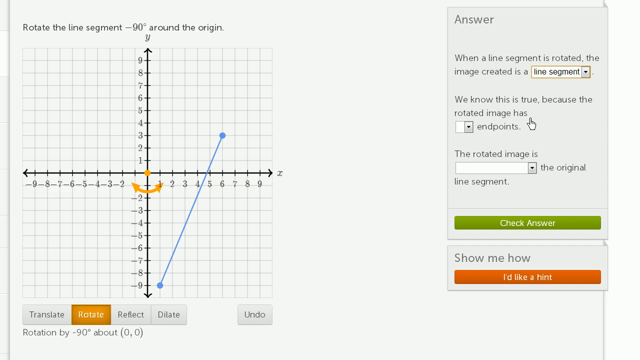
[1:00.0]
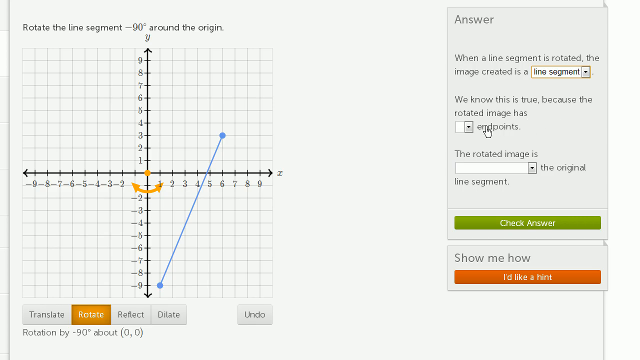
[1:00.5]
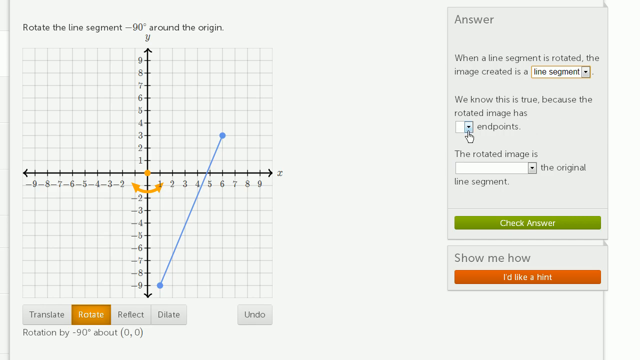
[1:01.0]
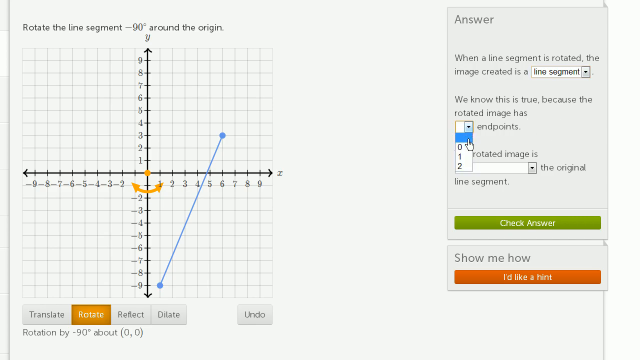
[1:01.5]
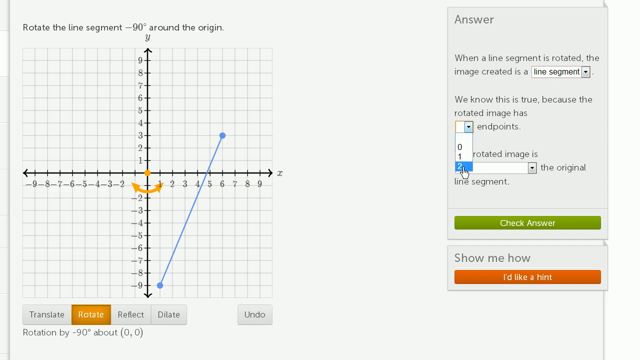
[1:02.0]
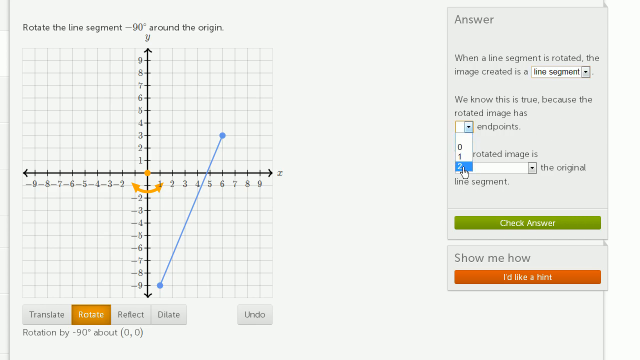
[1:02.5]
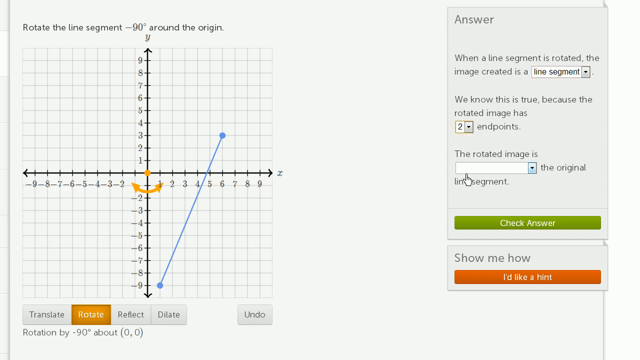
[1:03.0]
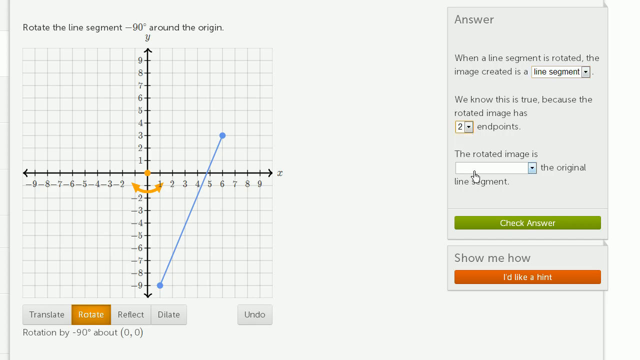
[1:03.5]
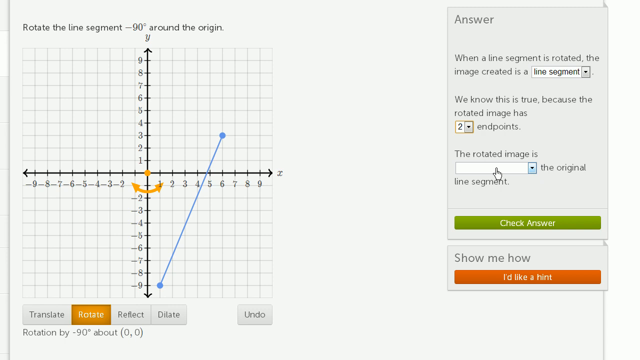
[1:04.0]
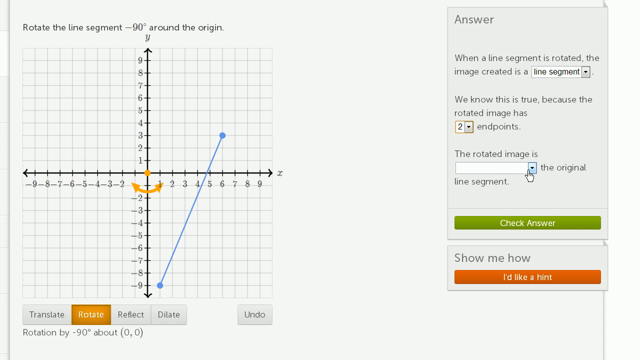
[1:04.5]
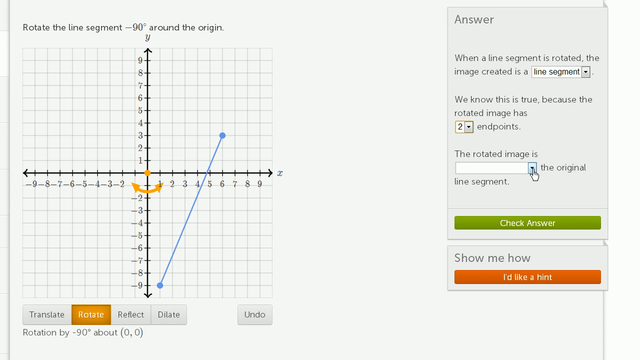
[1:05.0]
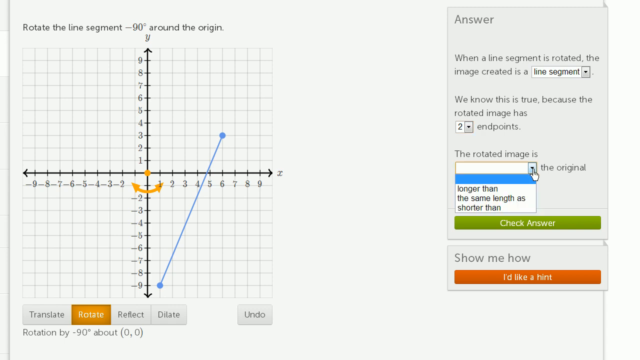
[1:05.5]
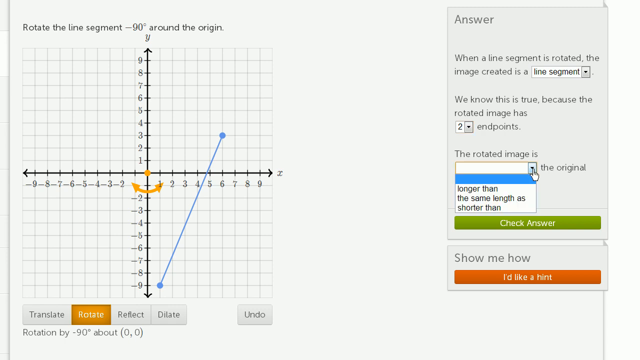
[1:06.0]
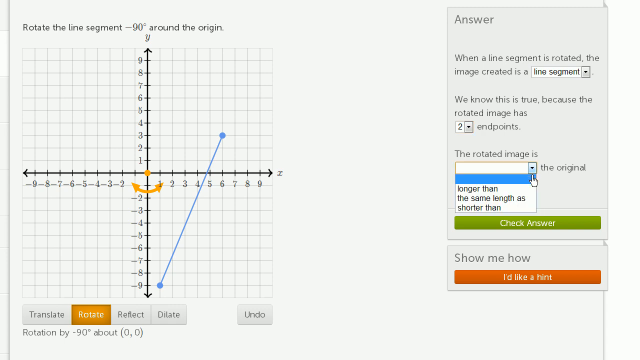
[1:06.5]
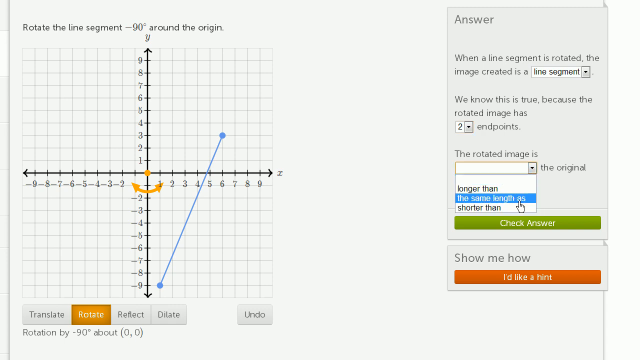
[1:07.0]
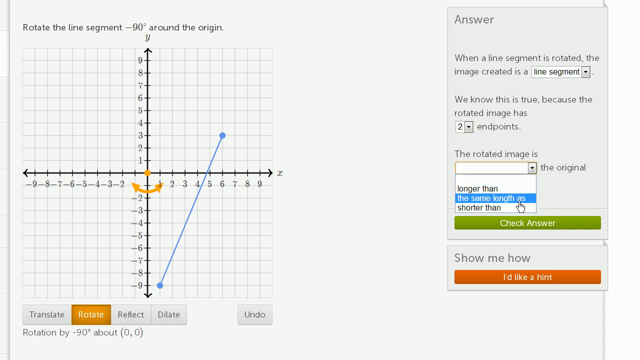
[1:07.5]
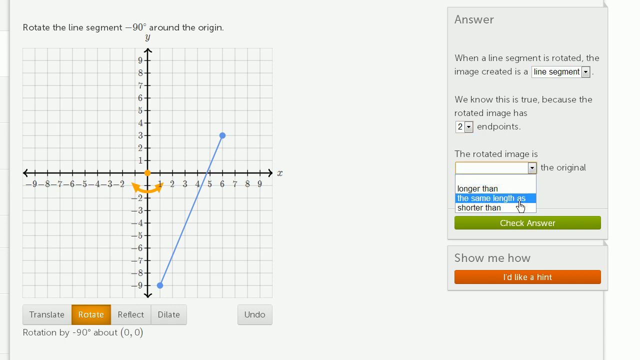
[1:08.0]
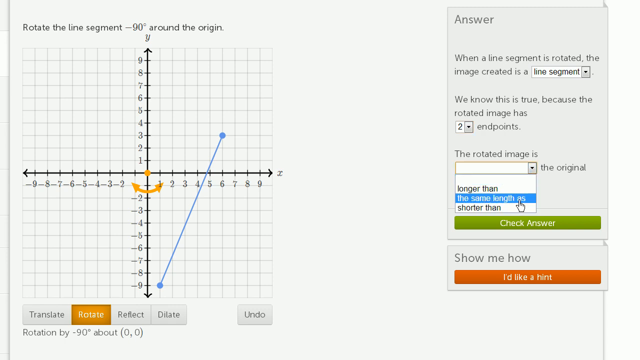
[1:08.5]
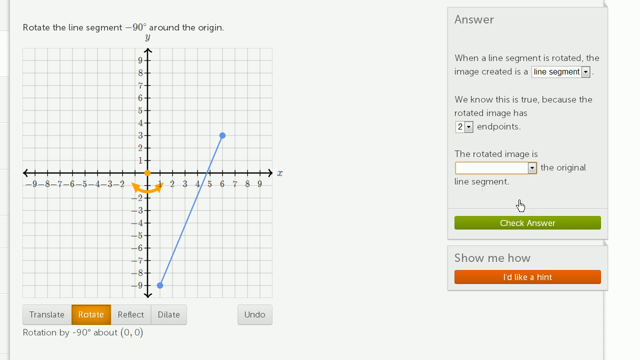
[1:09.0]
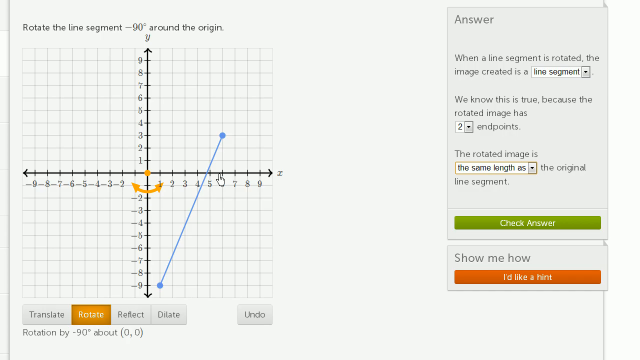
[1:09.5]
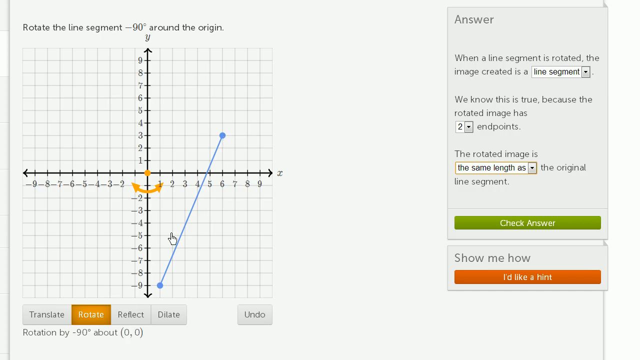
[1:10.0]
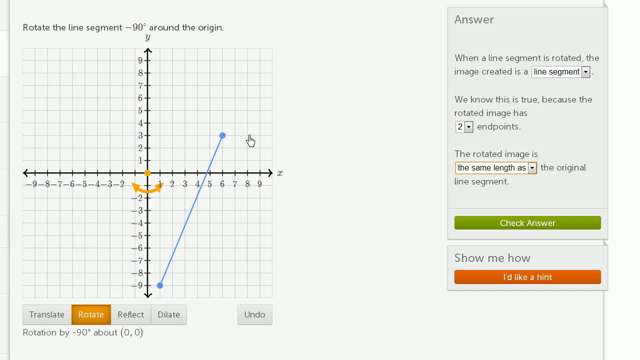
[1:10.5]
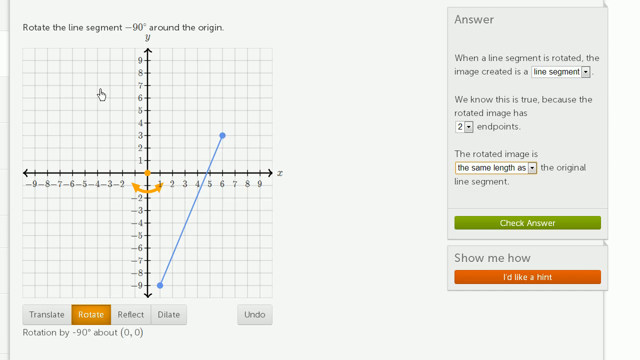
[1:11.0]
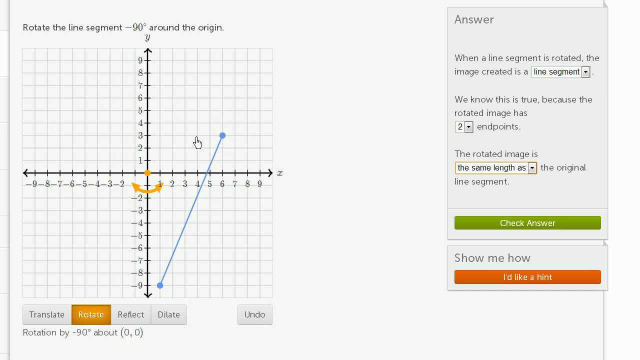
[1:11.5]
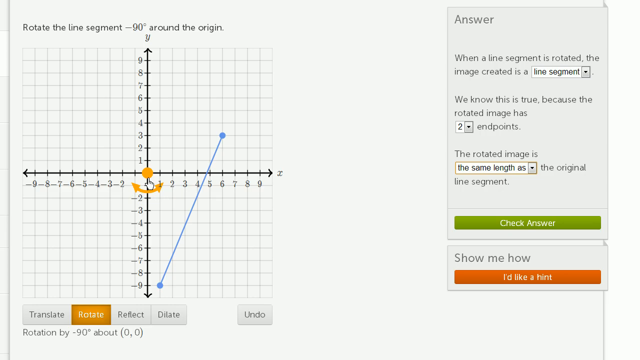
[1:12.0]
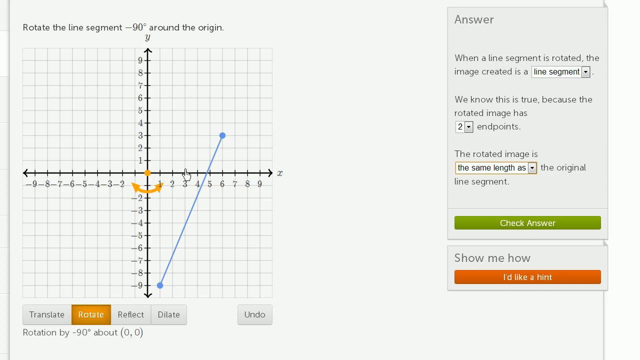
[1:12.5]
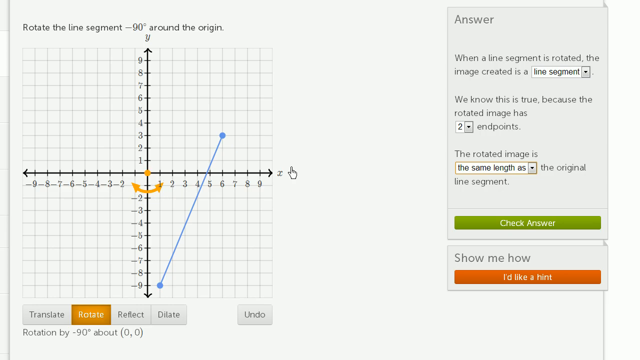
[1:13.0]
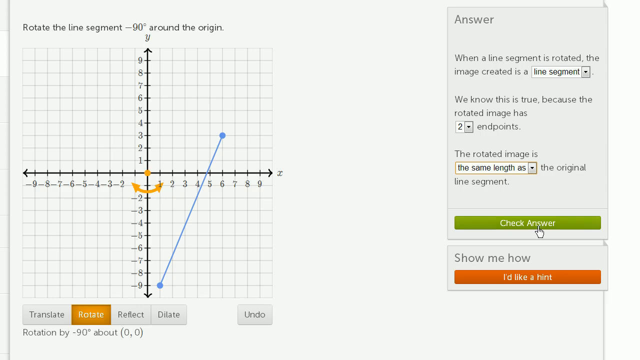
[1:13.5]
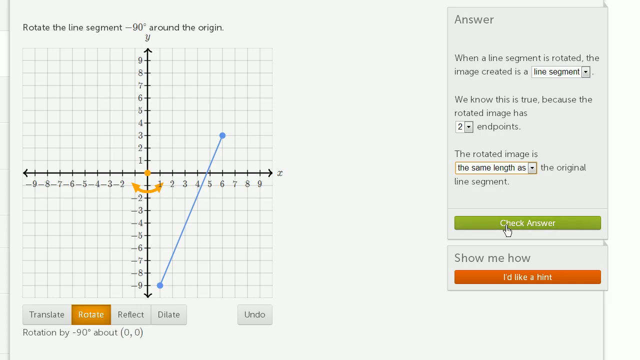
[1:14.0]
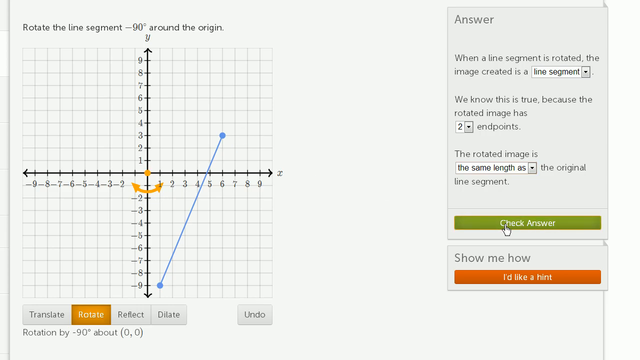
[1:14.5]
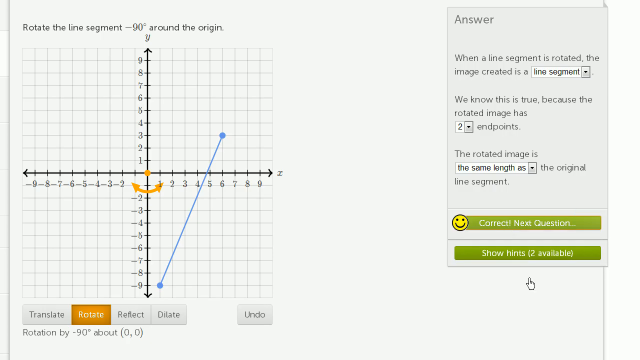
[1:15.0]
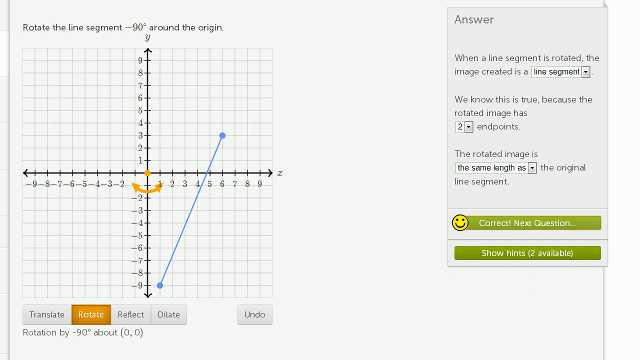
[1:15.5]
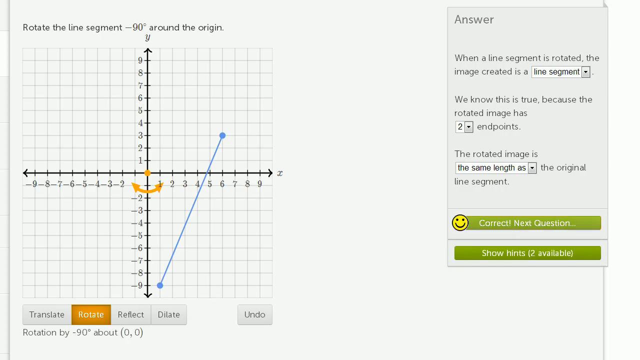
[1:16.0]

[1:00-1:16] The person answers the second sentence, "we know this is true because the rotated image has," choosing from 0, 1 and 2 endpoints, and selects 2 endpoints. For the last sentence, "the rotated image is," the options include "the same length as," and the person chooses "the same length as" the original line segment, showing that the line is the same. He clicks the check answer button and receives a message that the answer is correct, with the option to go to the next question.